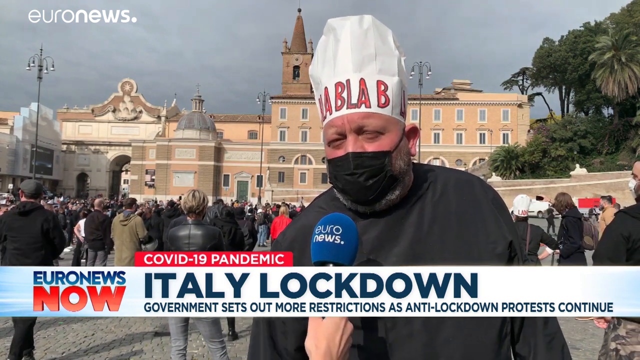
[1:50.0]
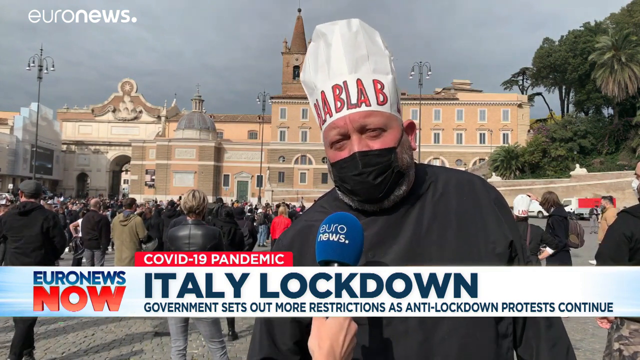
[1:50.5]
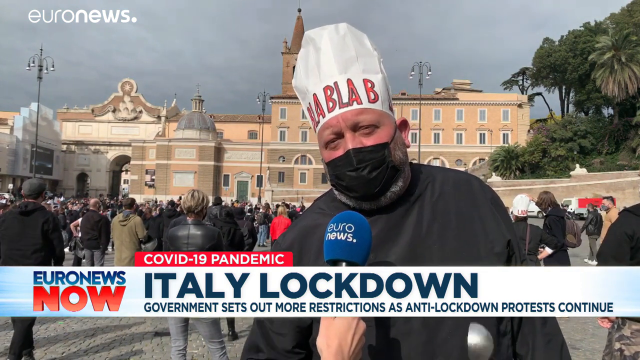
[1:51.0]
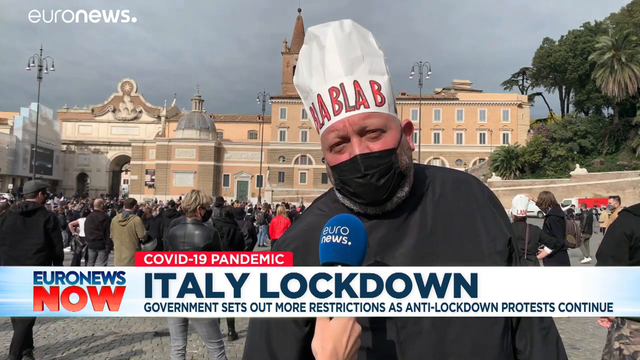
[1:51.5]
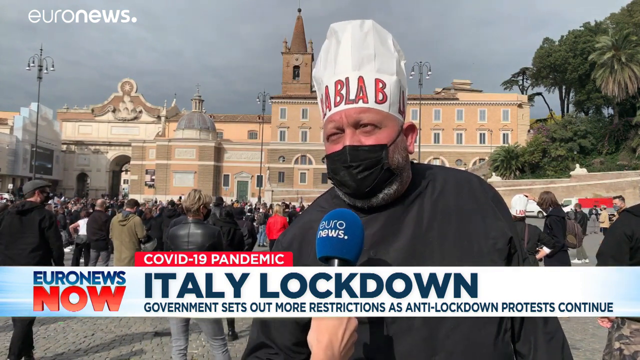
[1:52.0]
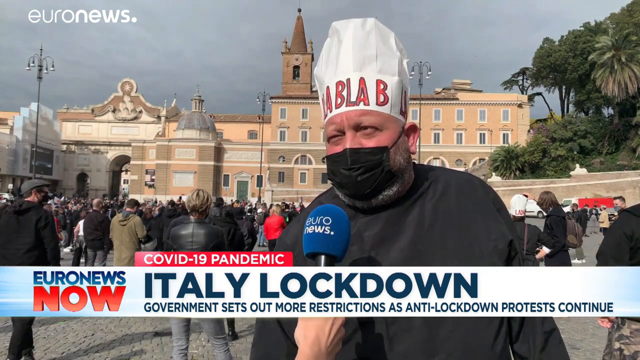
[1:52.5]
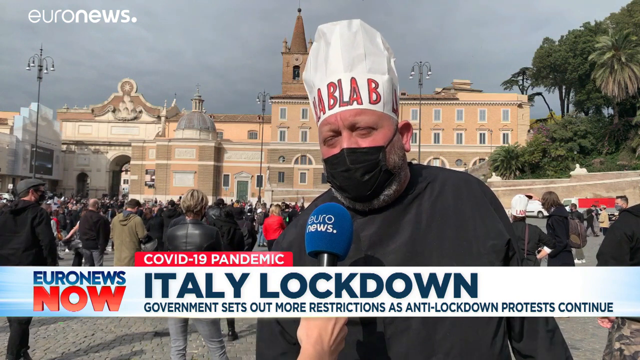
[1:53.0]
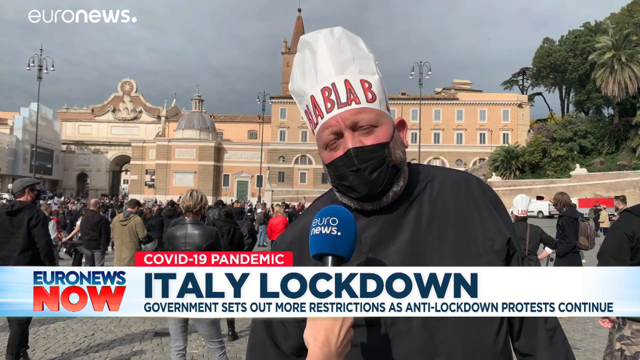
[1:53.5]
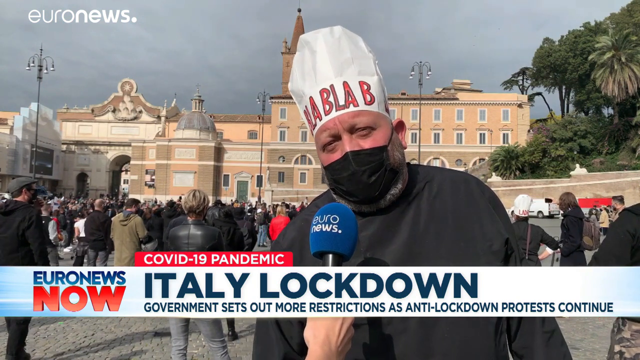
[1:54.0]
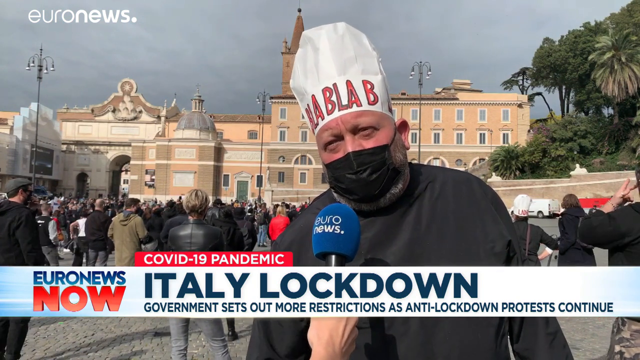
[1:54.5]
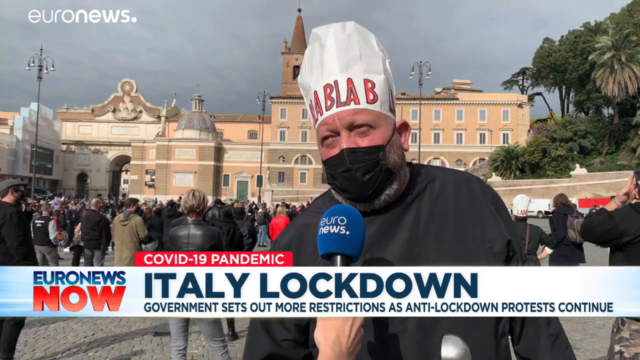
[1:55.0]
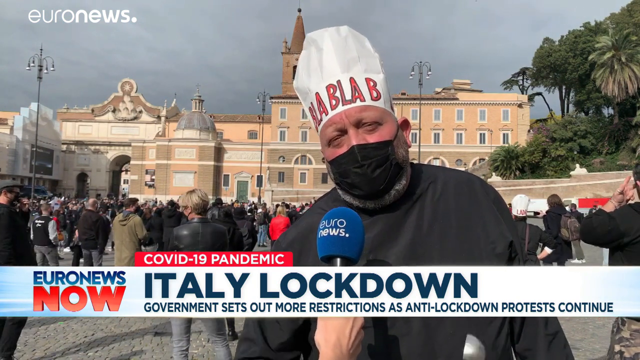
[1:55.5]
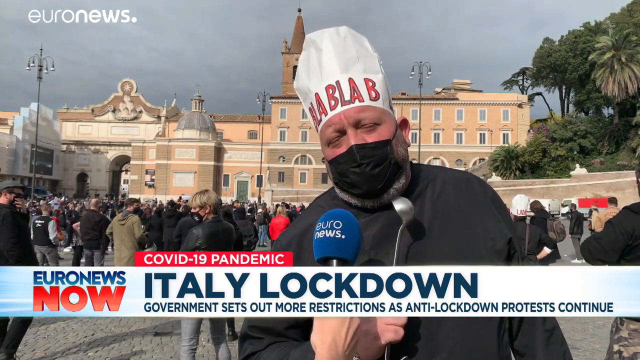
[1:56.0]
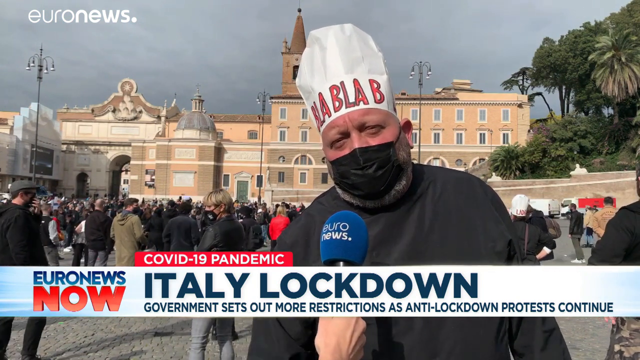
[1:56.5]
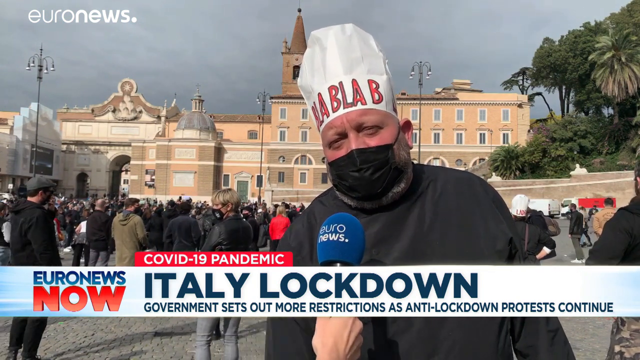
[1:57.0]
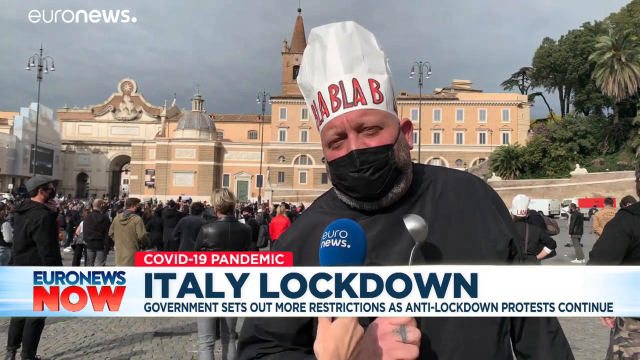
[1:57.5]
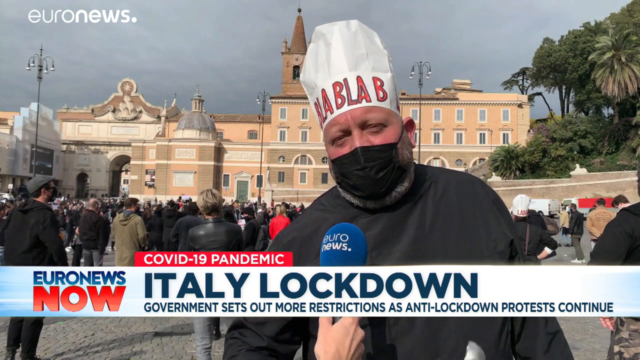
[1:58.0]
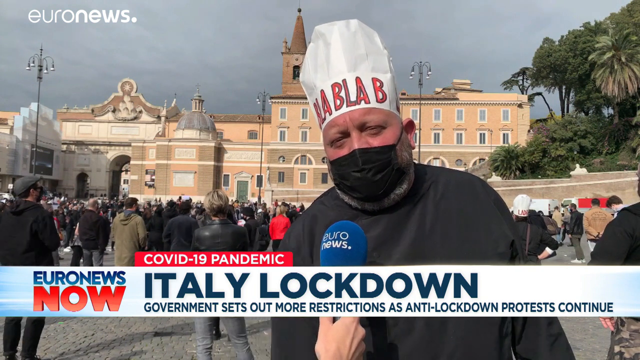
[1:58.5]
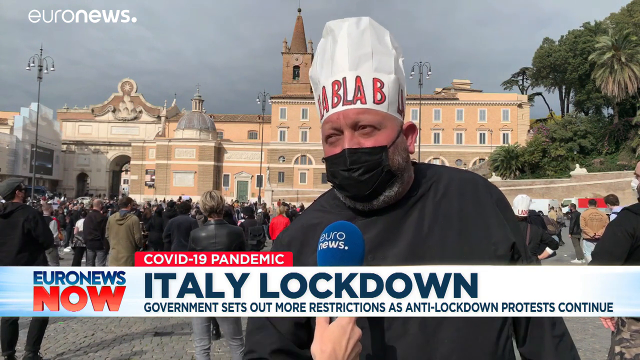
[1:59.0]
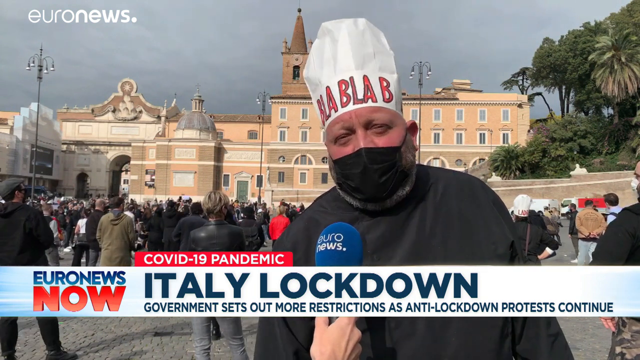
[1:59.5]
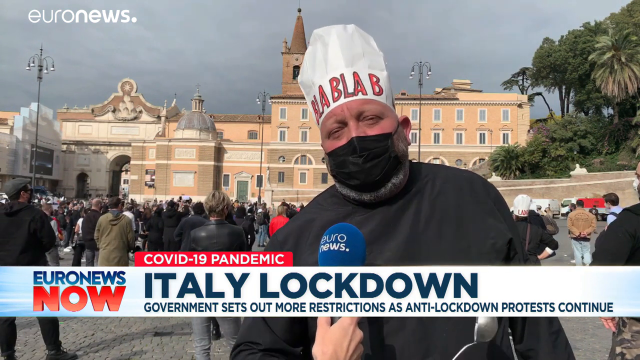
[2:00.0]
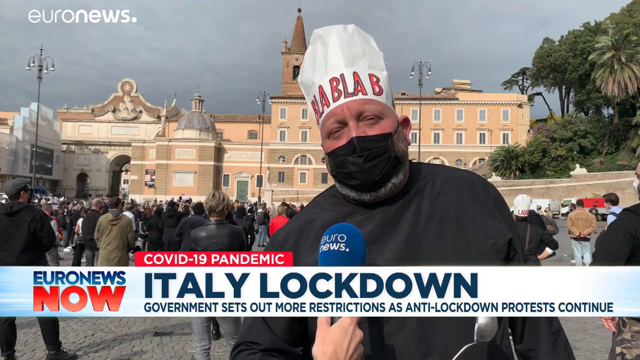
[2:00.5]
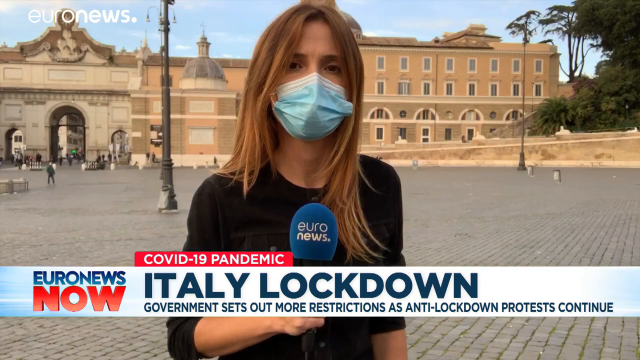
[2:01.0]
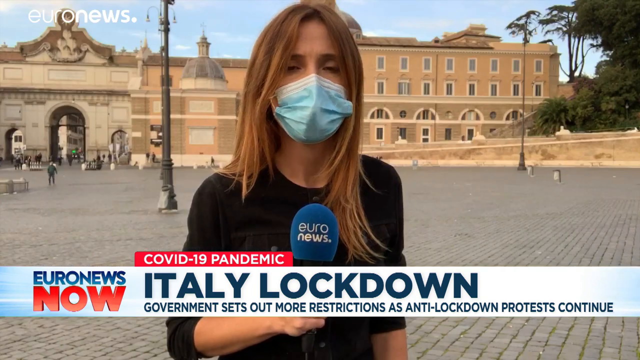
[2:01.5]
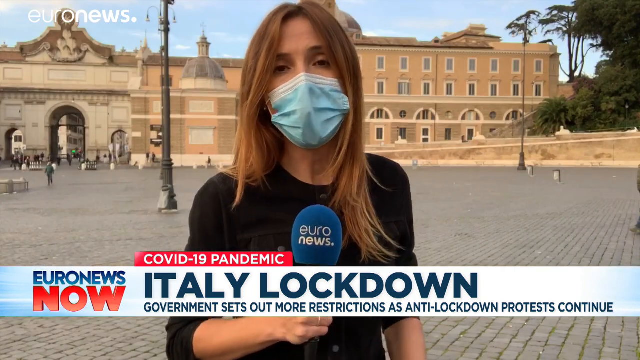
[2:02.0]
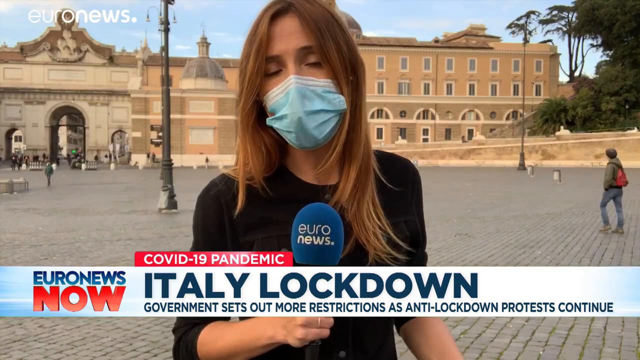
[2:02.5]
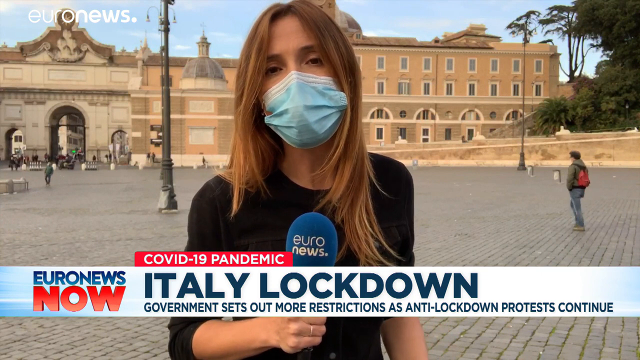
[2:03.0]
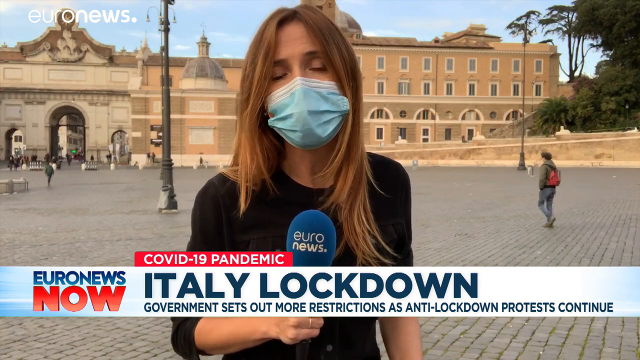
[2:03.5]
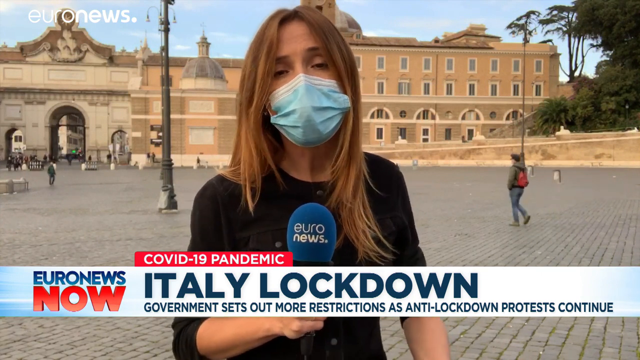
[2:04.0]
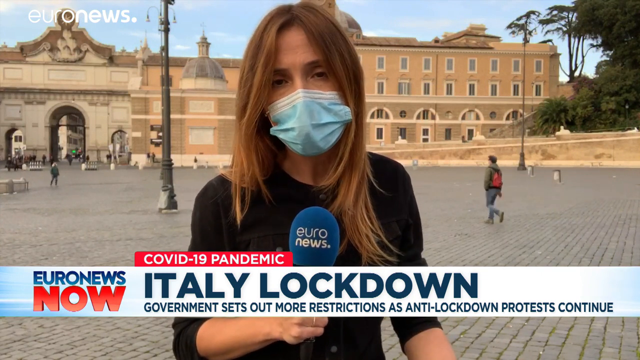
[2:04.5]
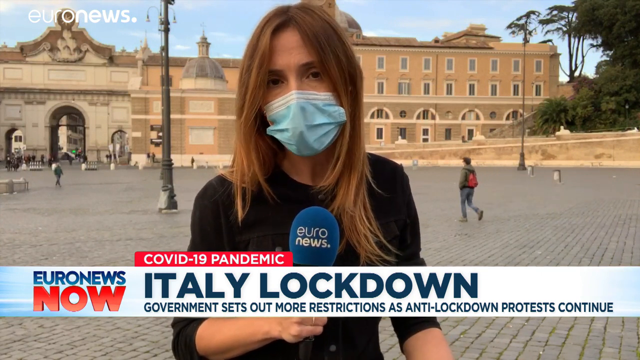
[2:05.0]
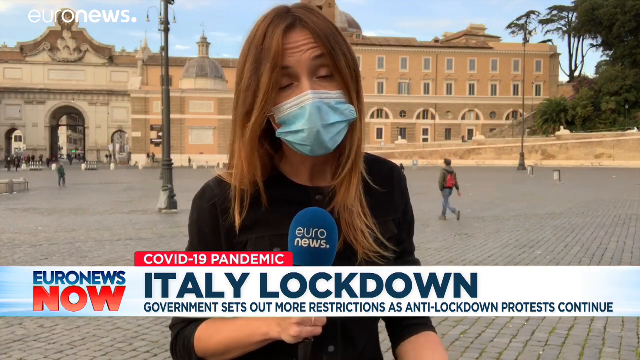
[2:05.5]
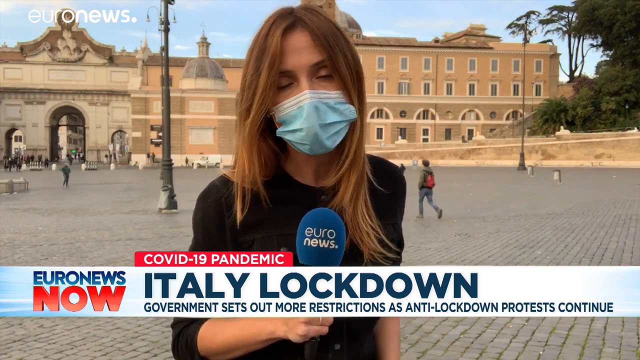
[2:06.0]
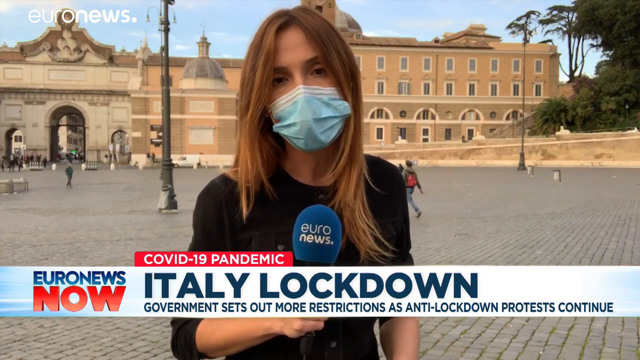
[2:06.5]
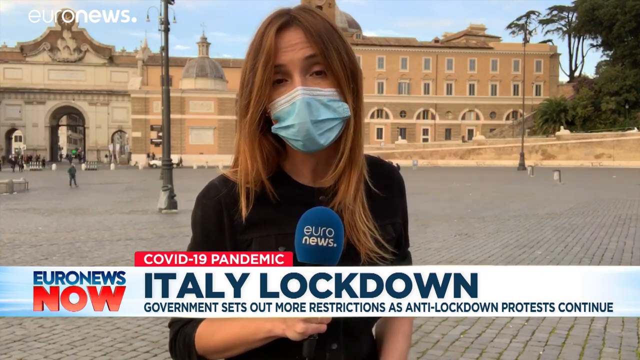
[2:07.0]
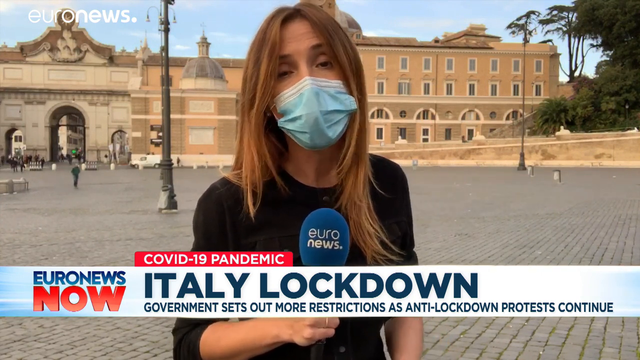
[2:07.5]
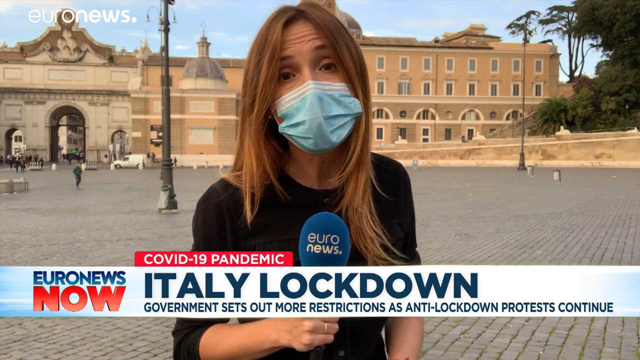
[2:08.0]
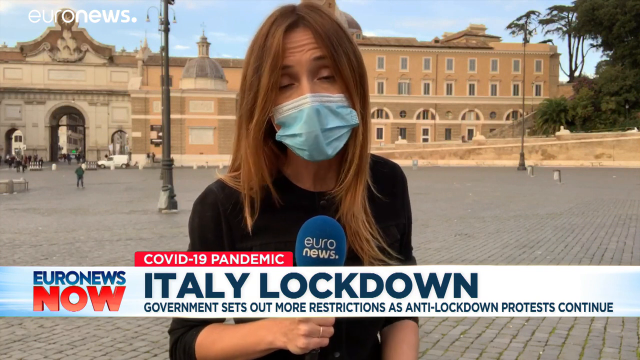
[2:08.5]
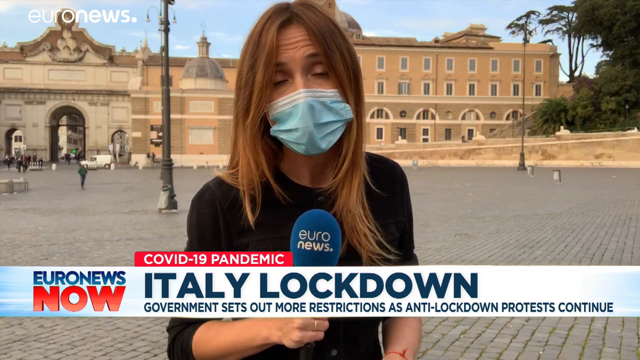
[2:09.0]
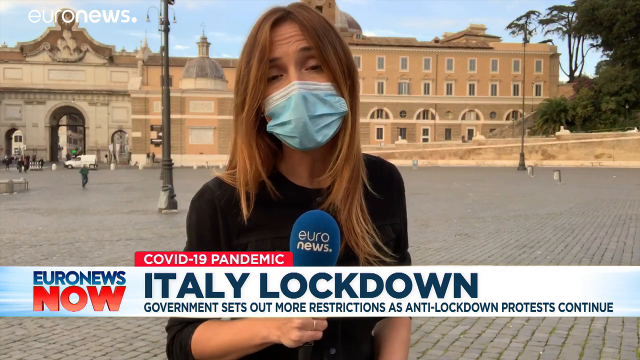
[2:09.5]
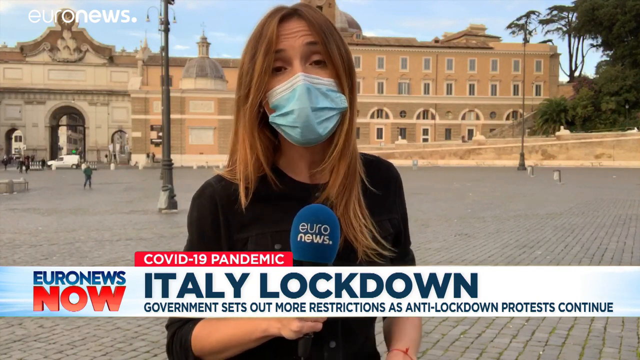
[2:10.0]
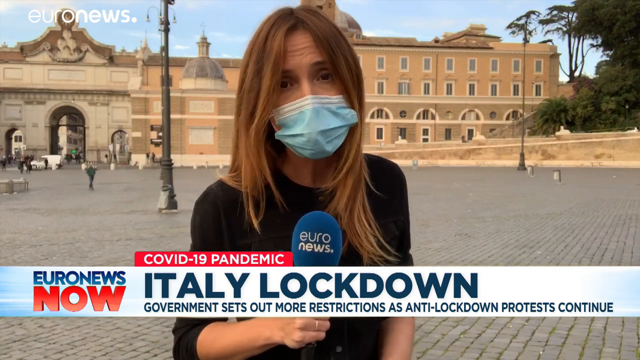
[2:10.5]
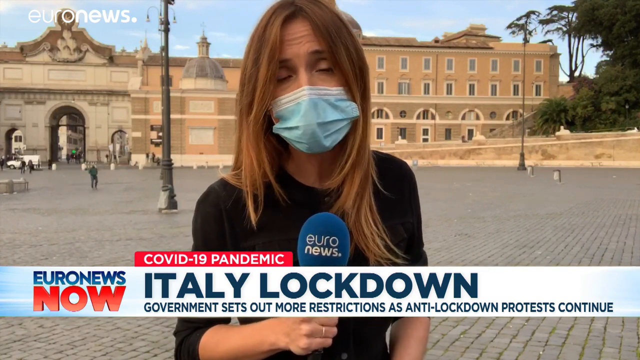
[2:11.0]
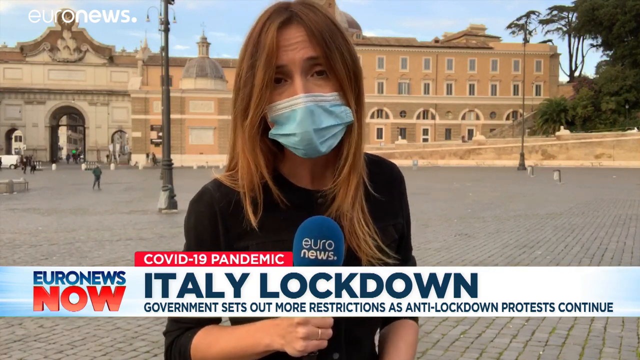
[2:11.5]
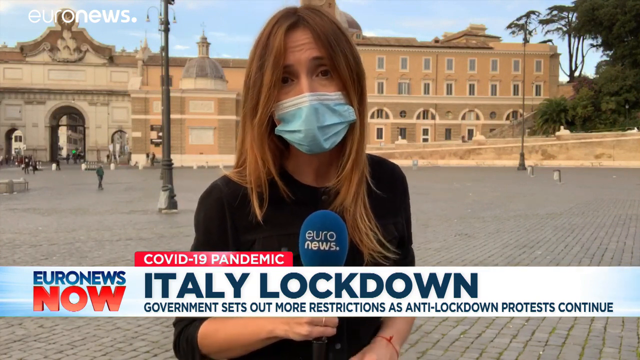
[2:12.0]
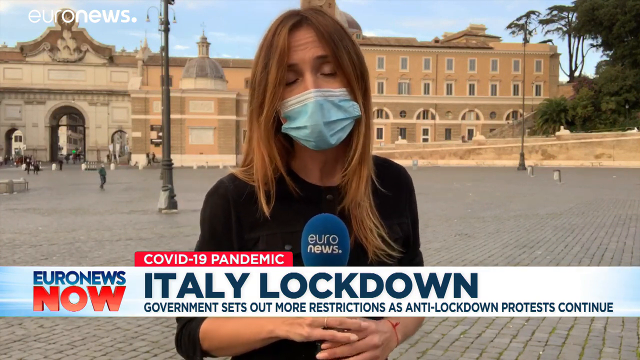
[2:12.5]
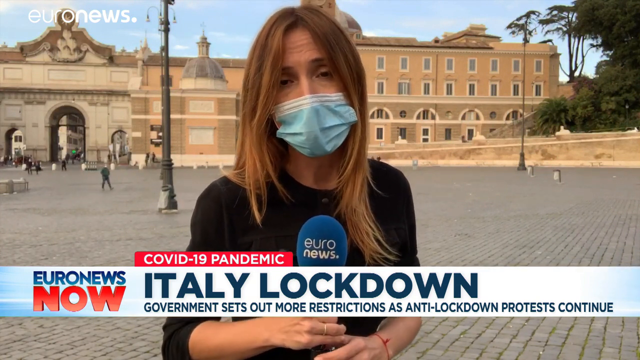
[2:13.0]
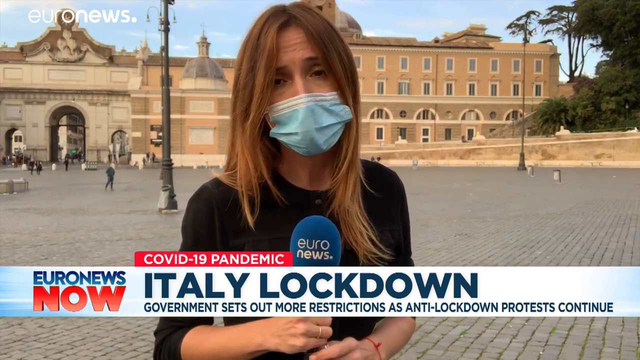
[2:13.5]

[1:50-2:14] A man wears a long white hat that kind of looks like a chef's hat, with orange and black lettering that looks like it says "BLAB", and a black COVID mask. A blue microphone with white text saying "Euronews" is in front of his face, and white text in the upper left corner says "Euronews". The setting looks very dark and dreary, with very dark, cloudy skies. At the bottom of the screen is a long white and blue banner with blue and orange text on the left that says "Euronews now", and more blue text that says "Italy lockdown. Government sets out more restrictions as anti-lockdown protests continue." Above it is an orange banner with white text that says "COVID-19 pandemic". A big crowd of people stands together, and there are quite a lot of trees in the upper right corner. The man talks into the microphone, slightly tilting his head to the side, and taps what looks to be a ladle on his hand. The video then transitions back to the woman with long brown blondish hair past her shoulders, wearing a white and blue face mask and holding a blue microphone that says "Euronews". There is a light post behind her to the left and to the right, and some trees in the upper right corner. She talks into the microphone, making micro facial expressions and nodding her head a bit.